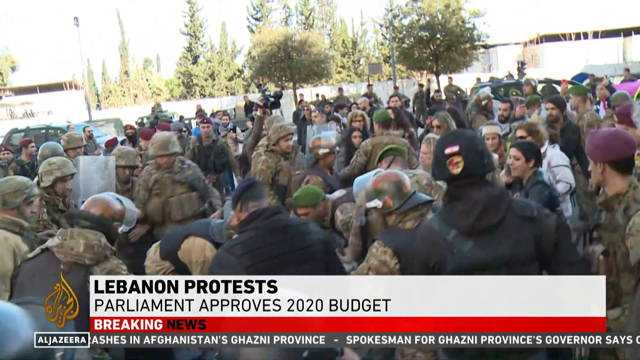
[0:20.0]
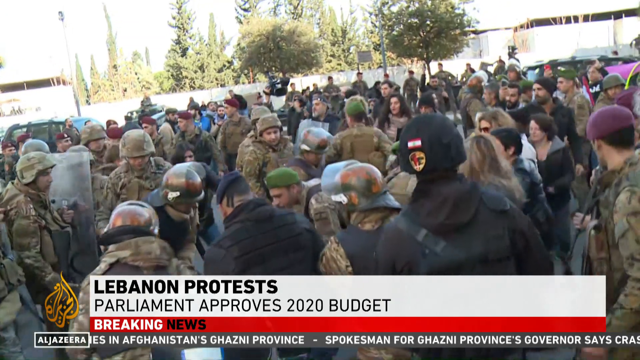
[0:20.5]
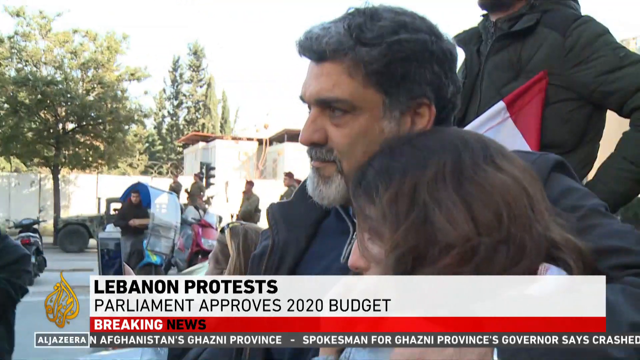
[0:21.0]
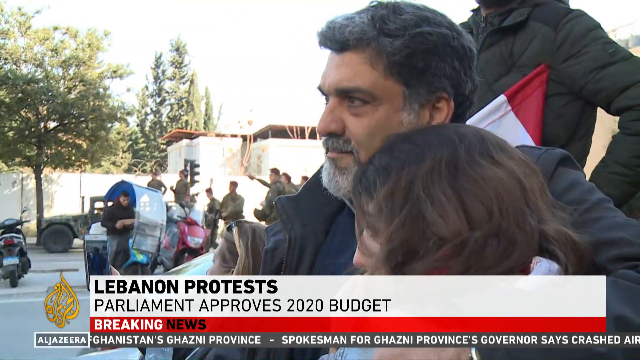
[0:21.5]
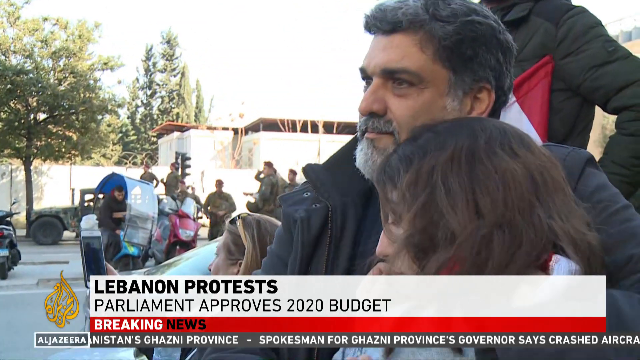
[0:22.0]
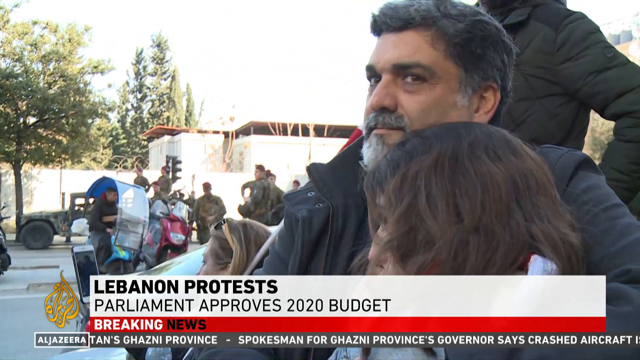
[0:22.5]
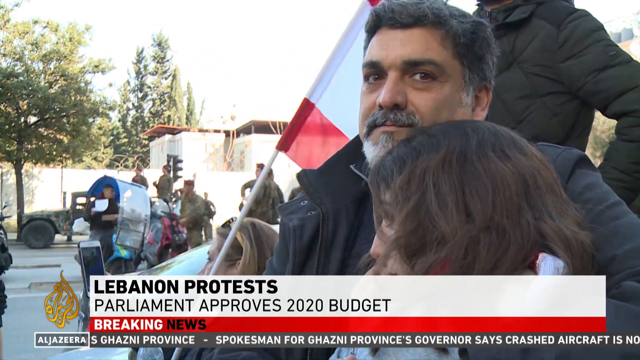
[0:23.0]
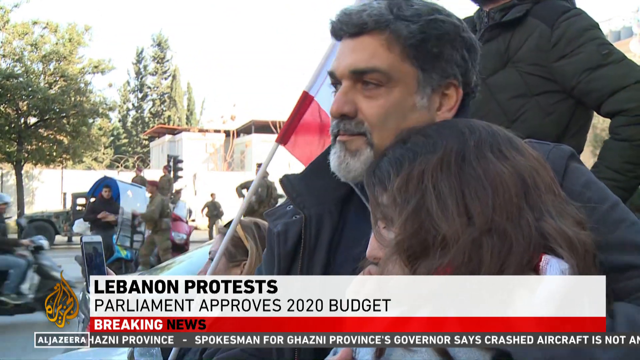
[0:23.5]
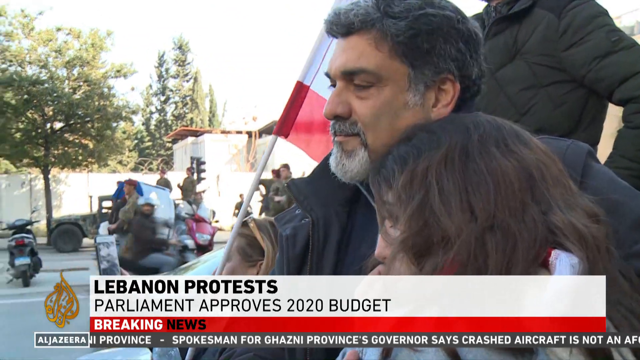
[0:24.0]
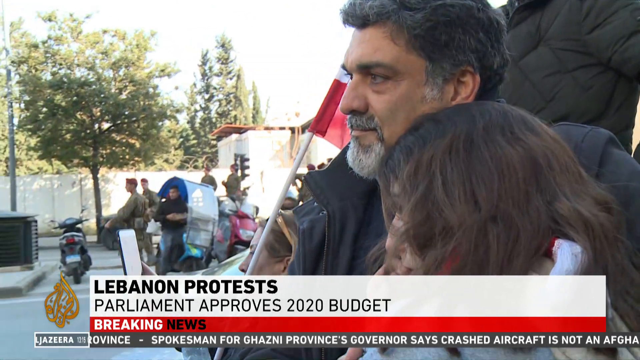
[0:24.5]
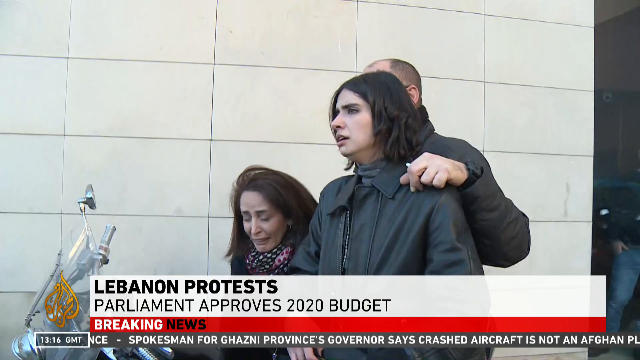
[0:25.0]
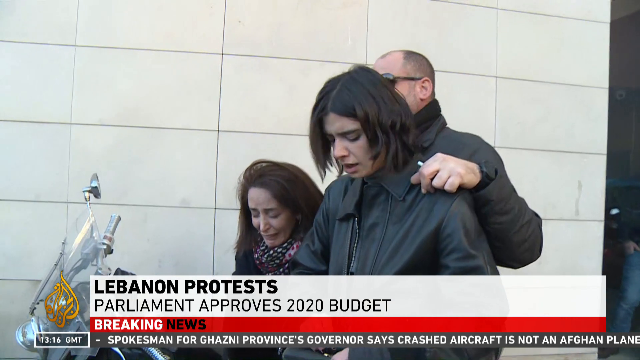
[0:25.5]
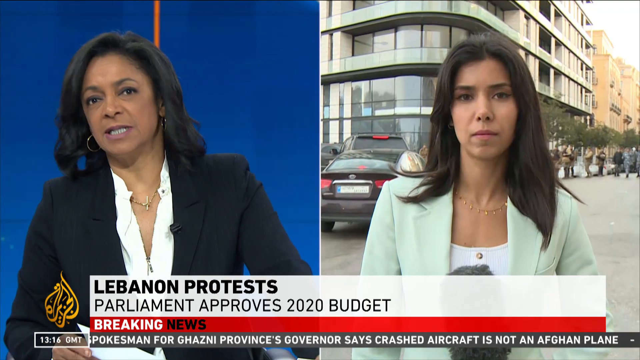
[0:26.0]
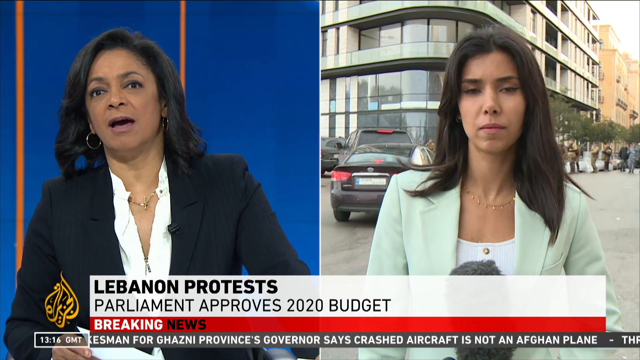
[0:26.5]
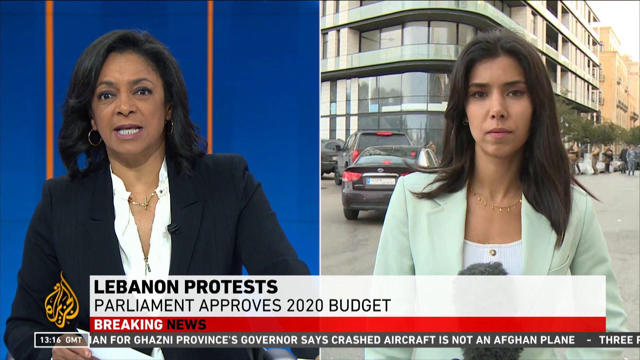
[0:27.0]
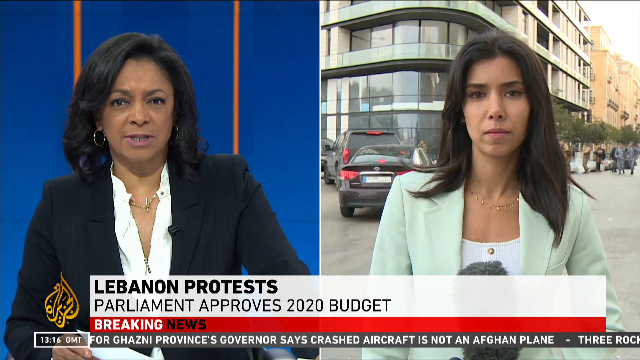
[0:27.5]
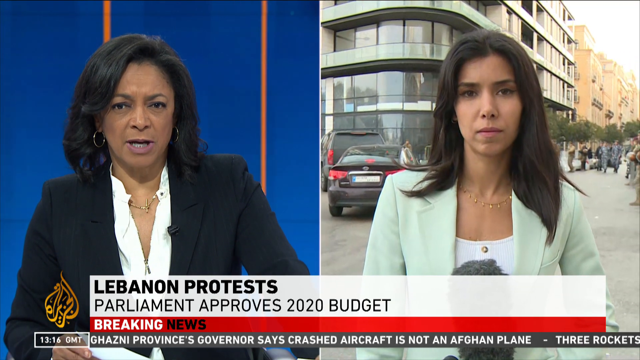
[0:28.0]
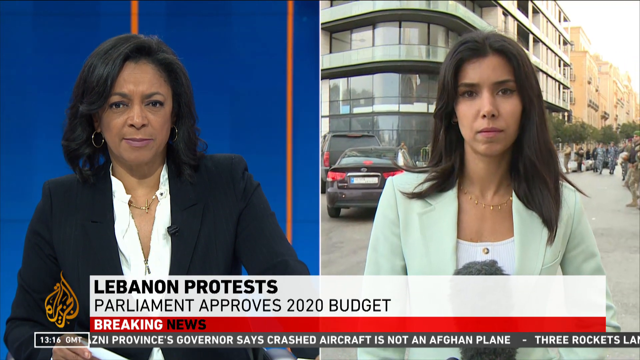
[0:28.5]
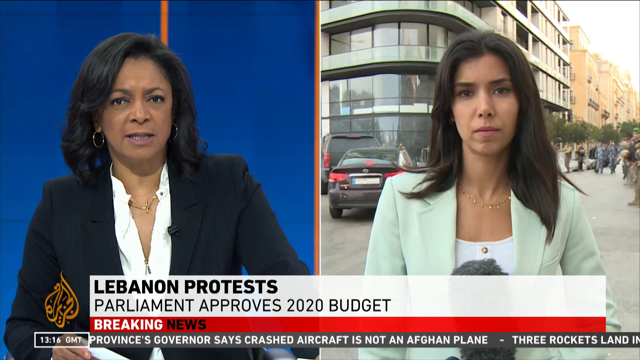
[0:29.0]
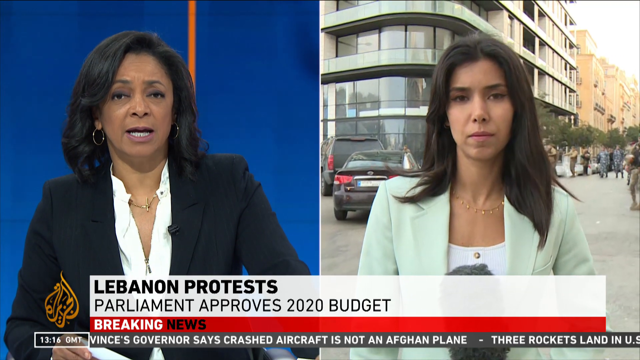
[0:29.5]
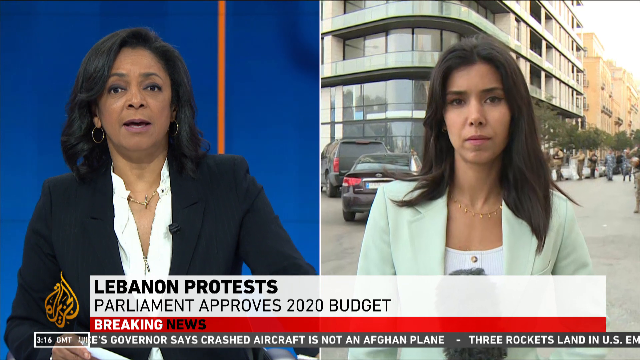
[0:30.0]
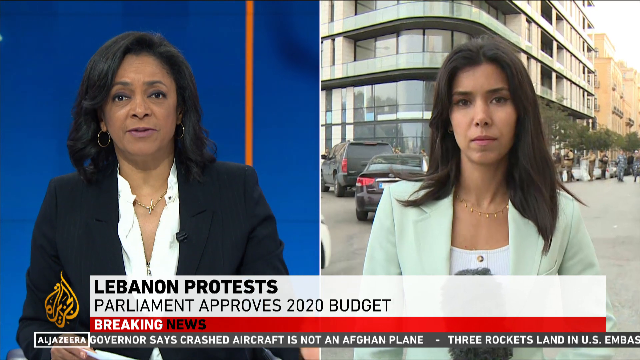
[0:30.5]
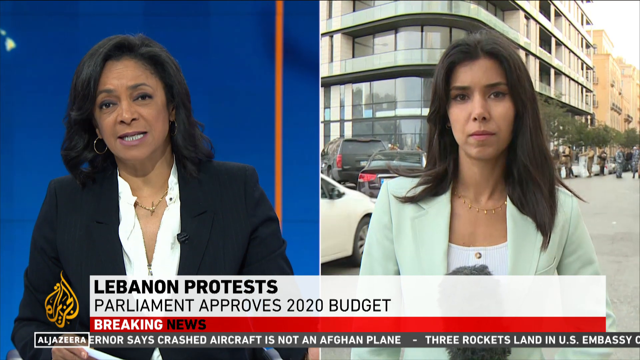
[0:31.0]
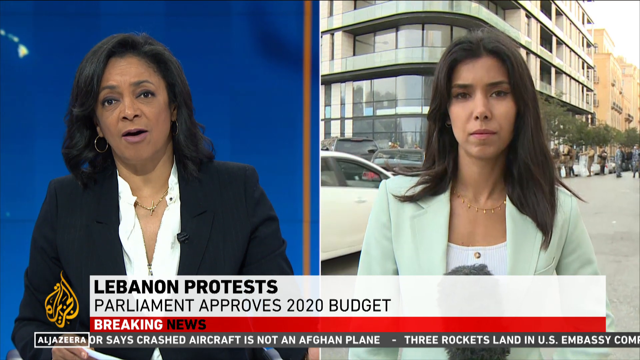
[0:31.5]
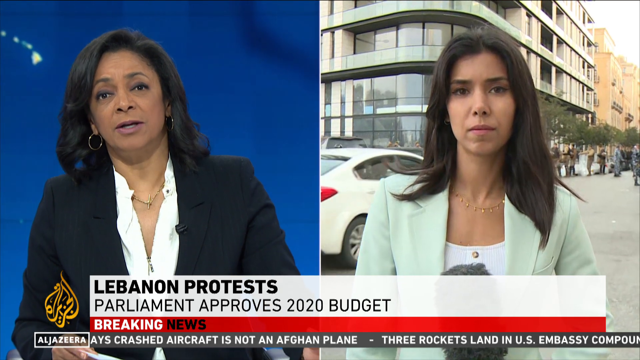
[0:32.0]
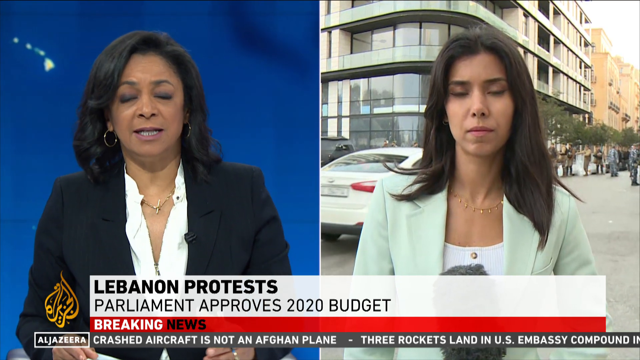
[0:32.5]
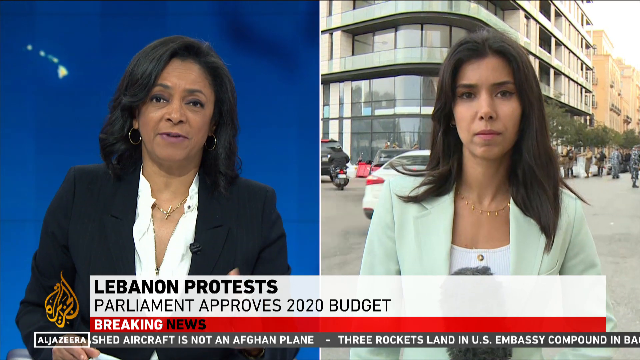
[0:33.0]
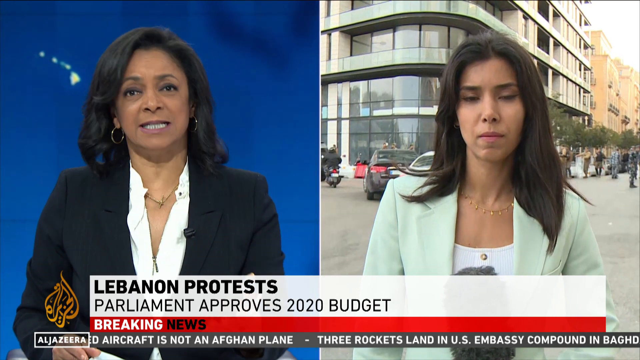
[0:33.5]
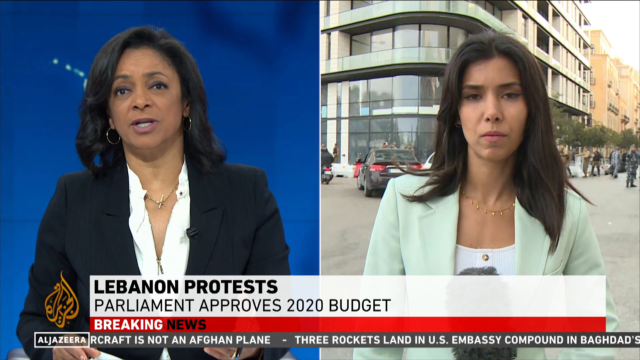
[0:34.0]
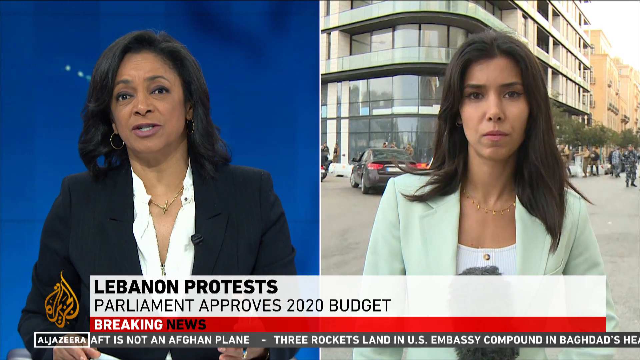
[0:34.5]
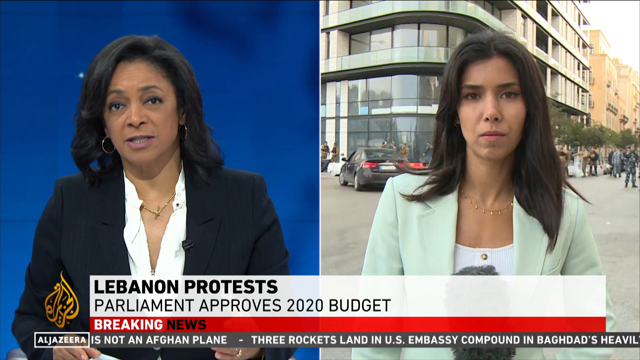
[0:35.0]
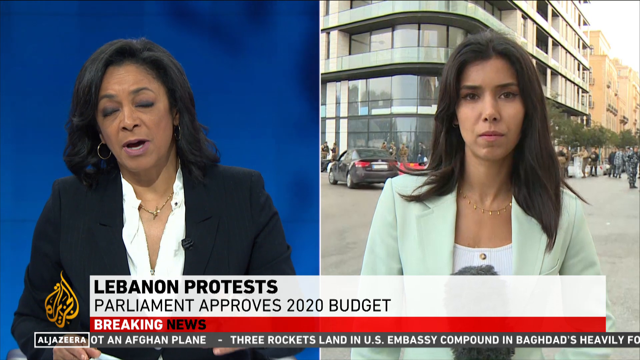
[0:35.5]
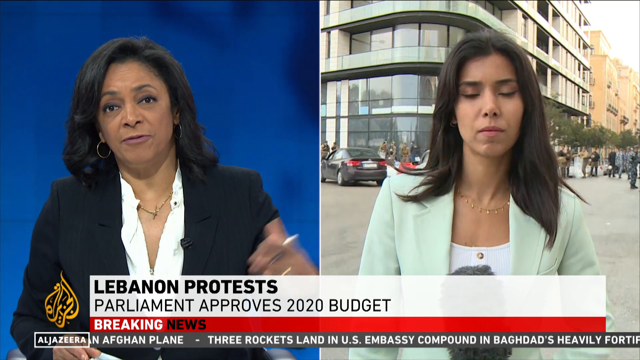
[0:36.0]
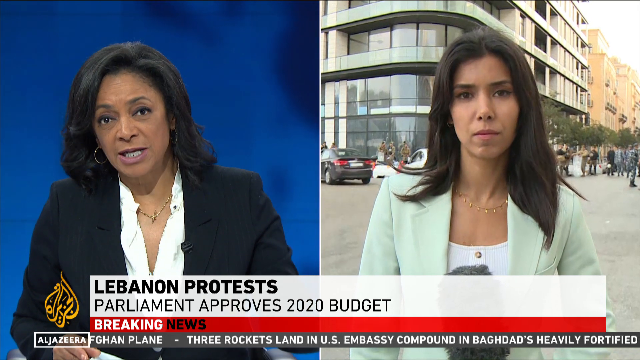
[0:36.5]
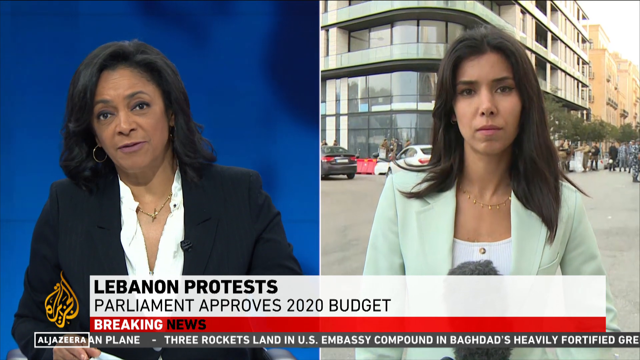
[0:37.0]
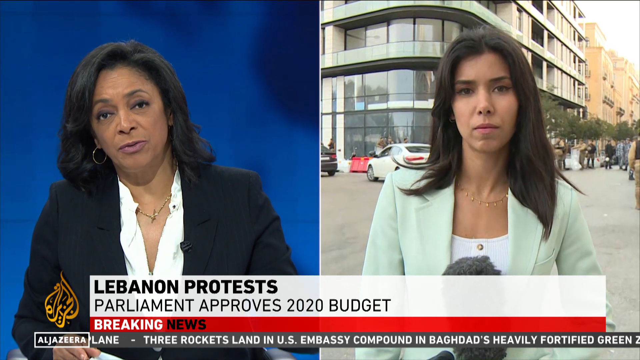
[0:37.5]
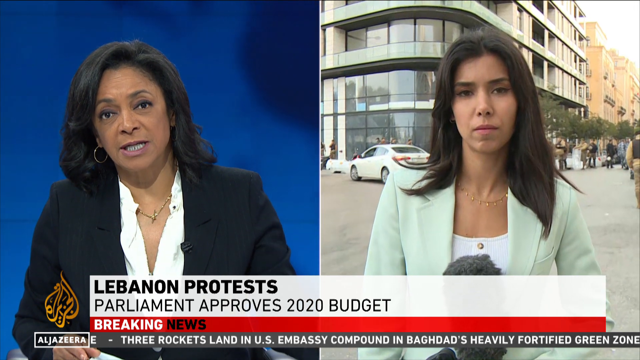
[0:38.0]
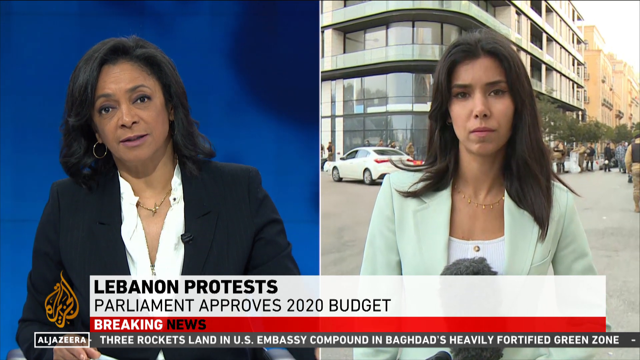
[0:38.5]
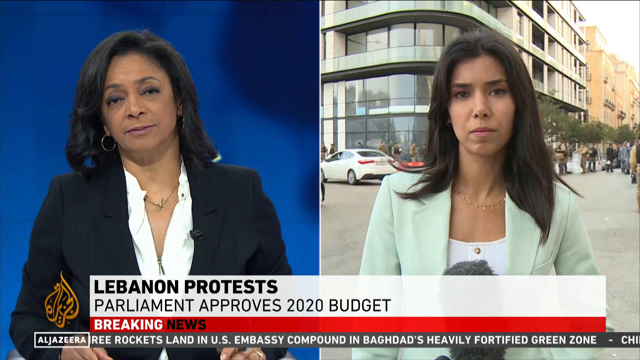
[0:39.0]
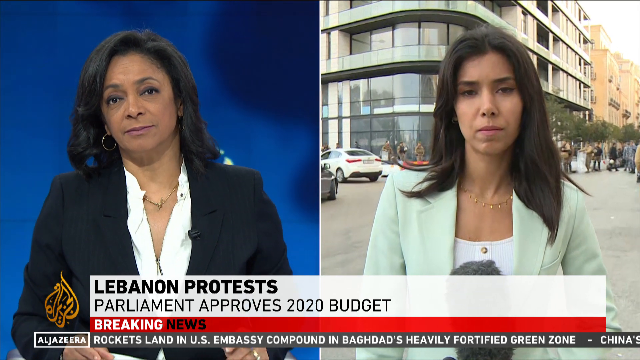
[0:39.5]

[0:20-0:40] The breaking news coverage continues on parliament approving the 2020 budget. A person stands with two other people on stairs in front of microphones. One woman is crying, and another woman appears to have a distressed look on her face. A man behind them has his hand on the shoulder of one of the women and is holding something in his hands. The scene cuts to the newscaster speaking with a reporter who is apparently on the scene, probably of the protest, standing in front of a building; the two talk back and forth. The video returns to the people standing, probably on steps, in front of a white wall that looks like it may be marble. It then goes back to the newscaster, who wears a black suit, a white shirt and a cross around her neck, and to the on-scene reporter, who wears an aqua-colored jacket with a white shirt. The newscaster talks while the reporter listens, responding only with head shakes.